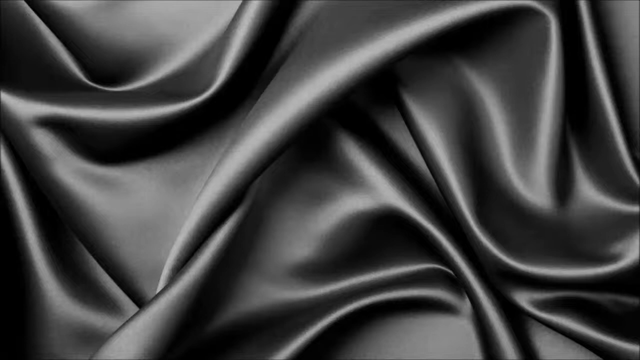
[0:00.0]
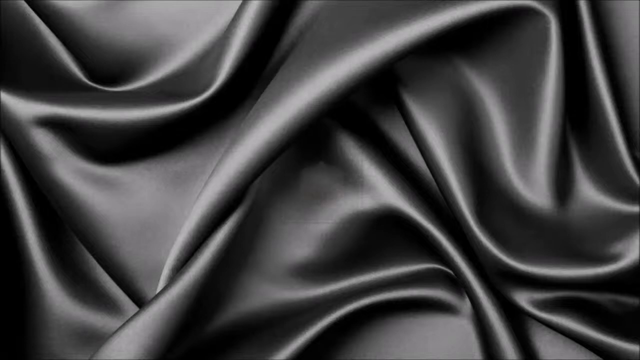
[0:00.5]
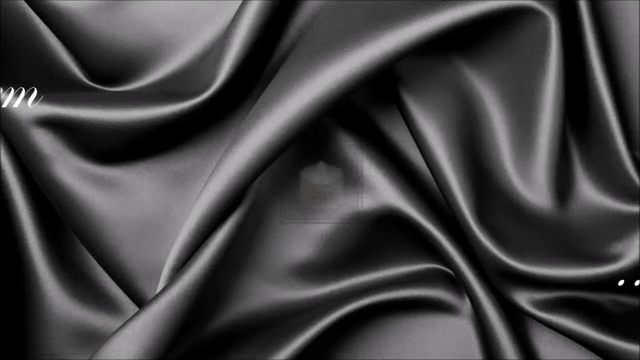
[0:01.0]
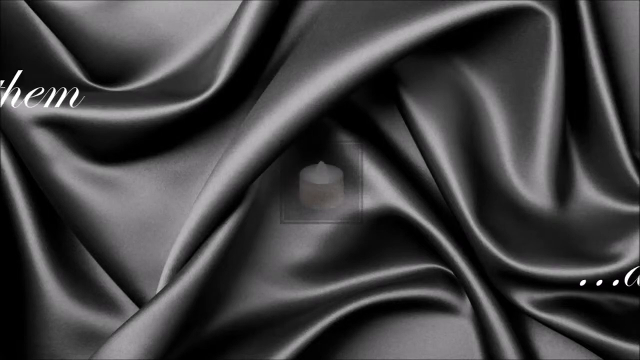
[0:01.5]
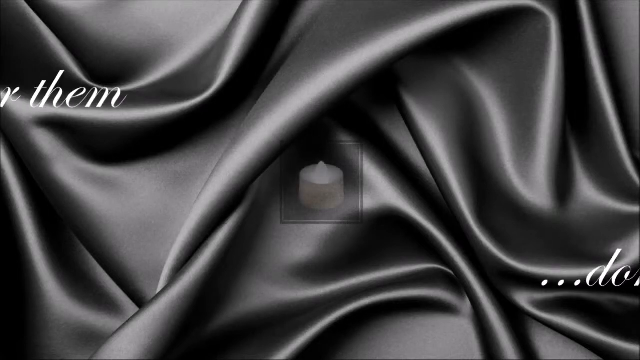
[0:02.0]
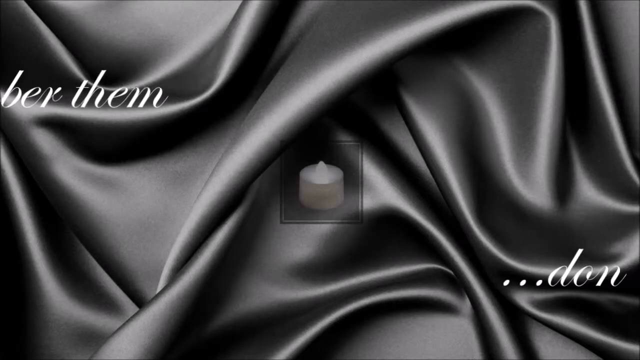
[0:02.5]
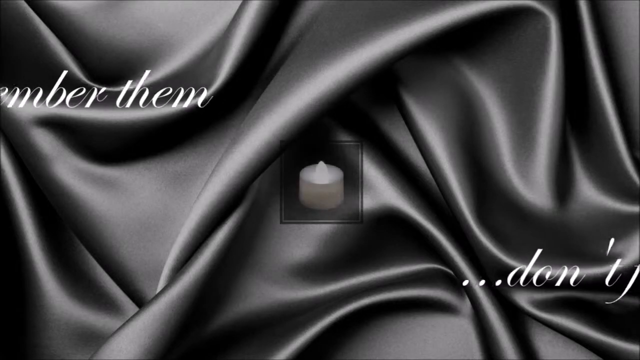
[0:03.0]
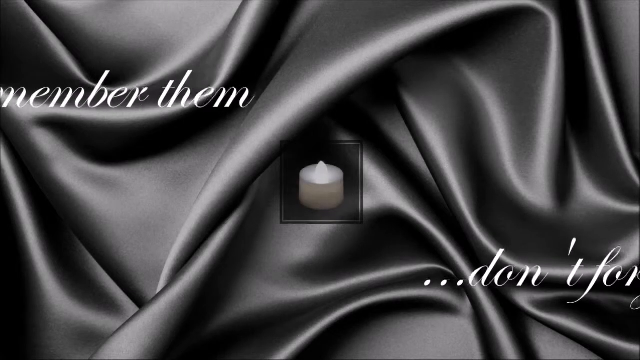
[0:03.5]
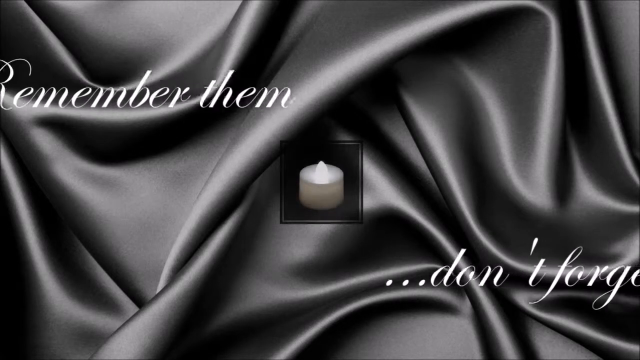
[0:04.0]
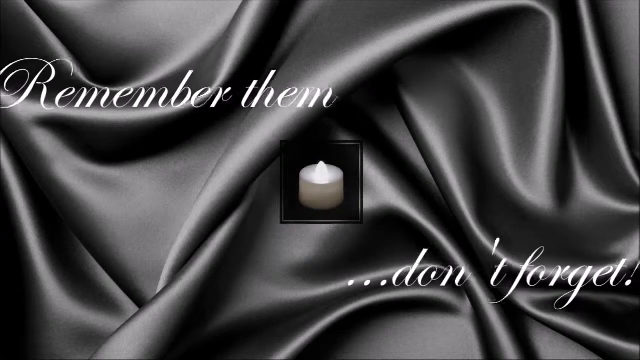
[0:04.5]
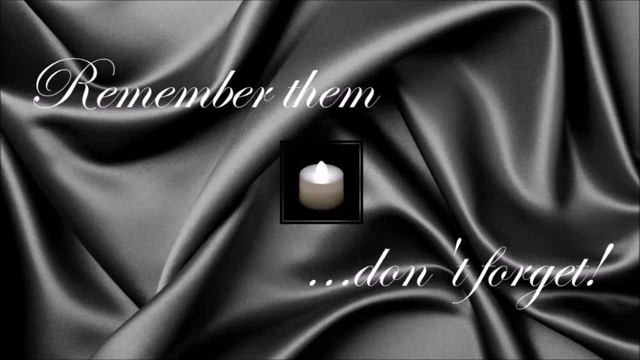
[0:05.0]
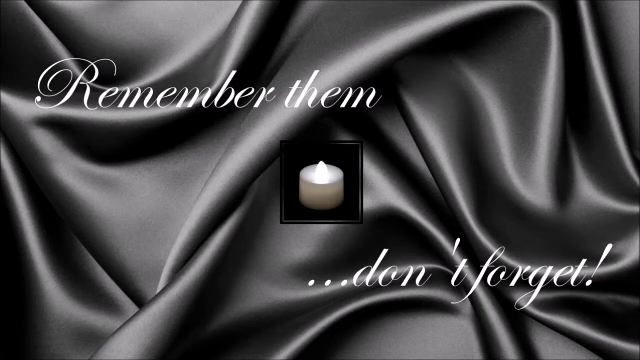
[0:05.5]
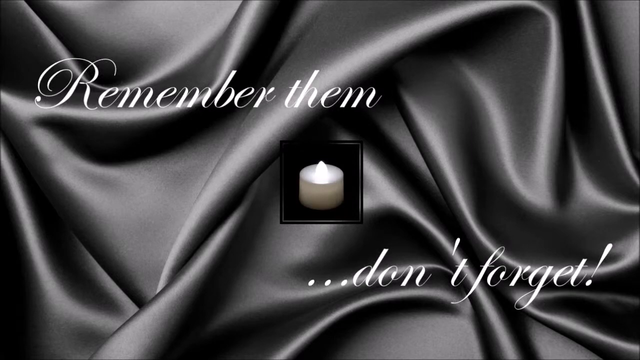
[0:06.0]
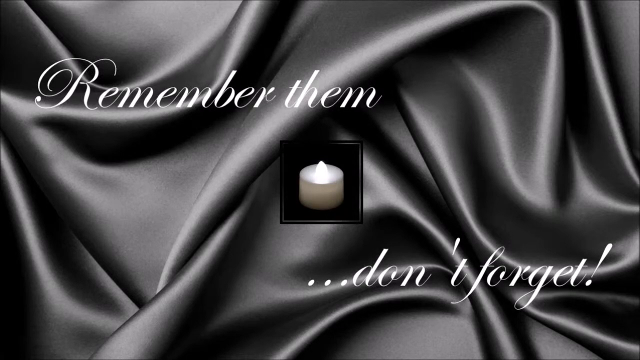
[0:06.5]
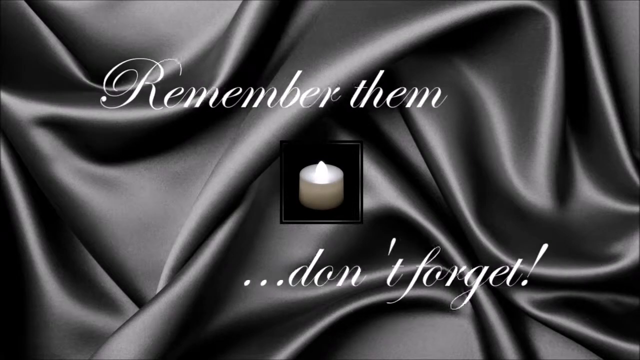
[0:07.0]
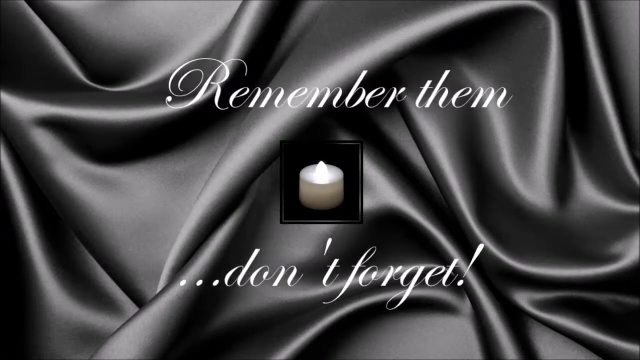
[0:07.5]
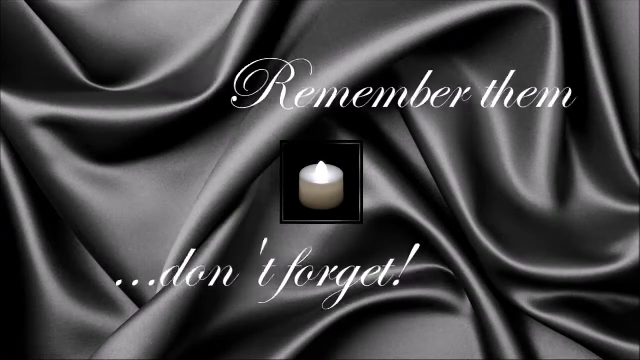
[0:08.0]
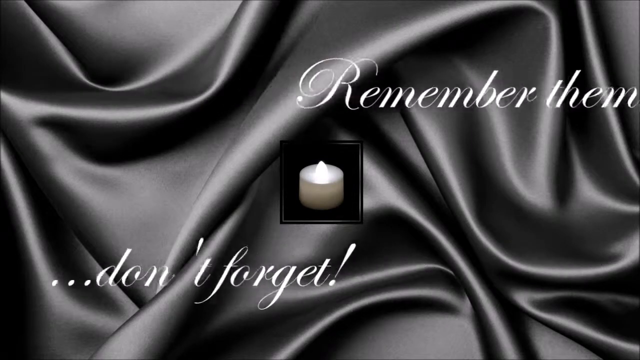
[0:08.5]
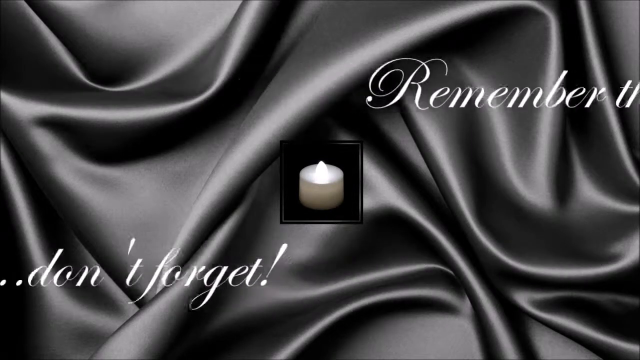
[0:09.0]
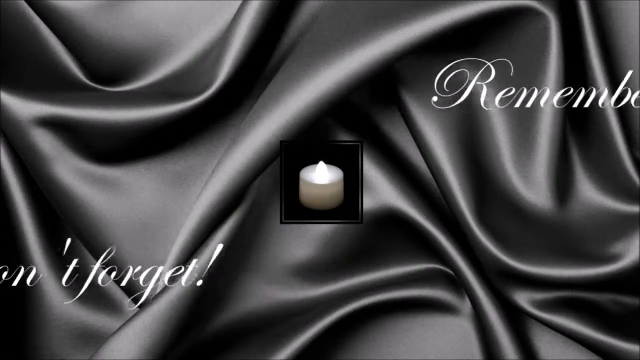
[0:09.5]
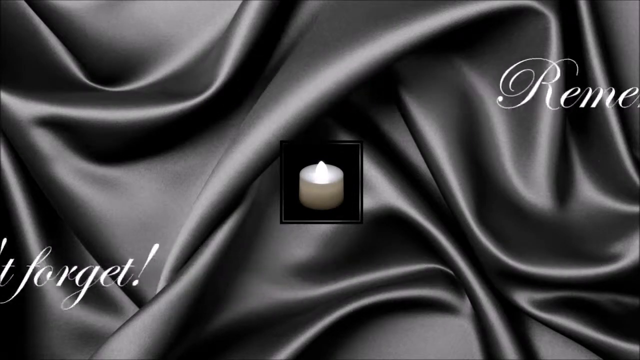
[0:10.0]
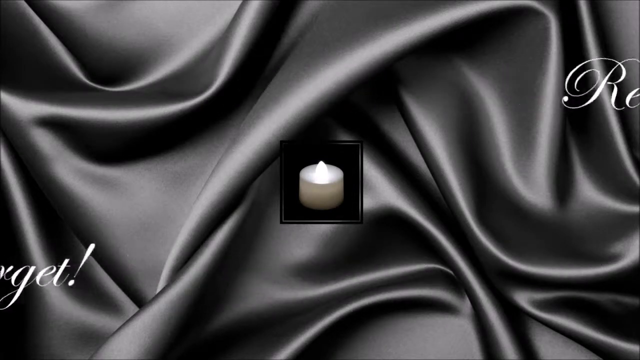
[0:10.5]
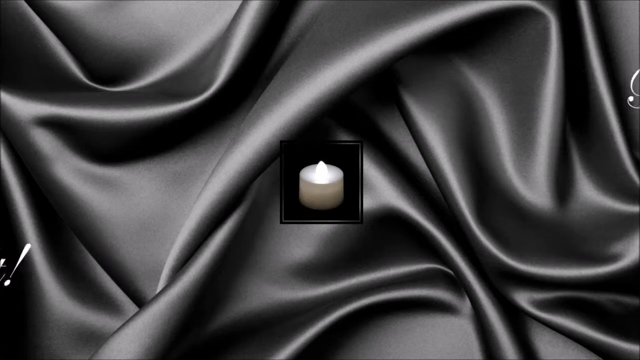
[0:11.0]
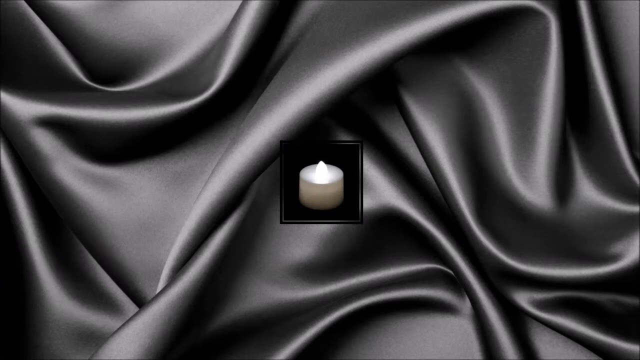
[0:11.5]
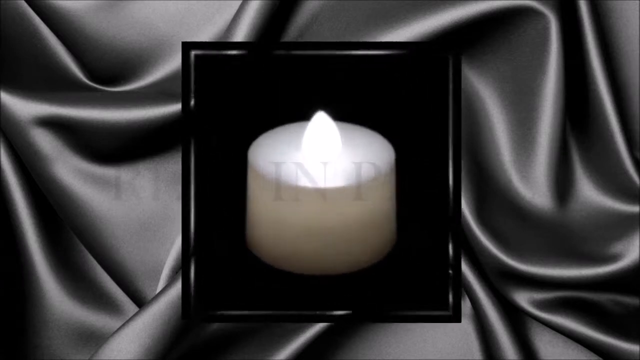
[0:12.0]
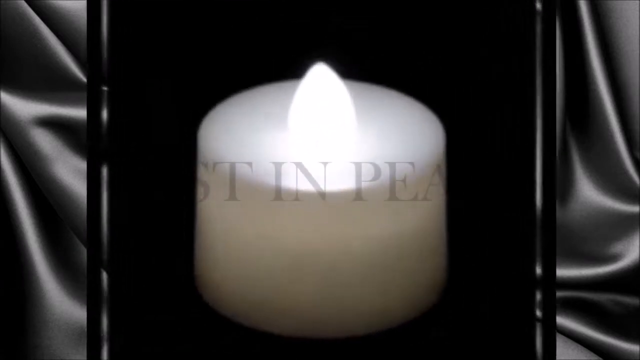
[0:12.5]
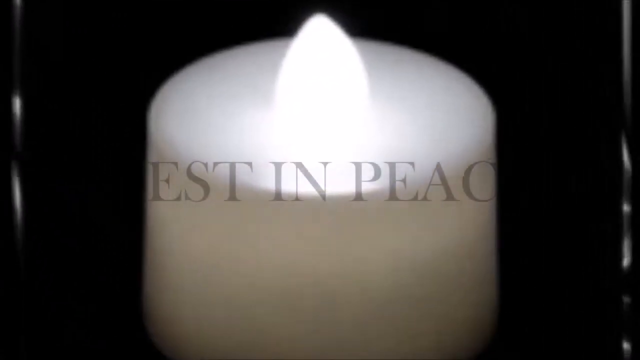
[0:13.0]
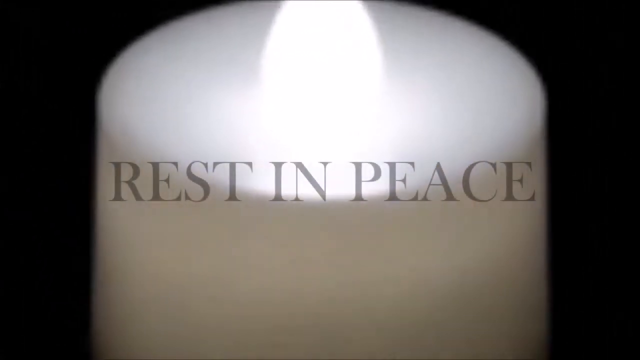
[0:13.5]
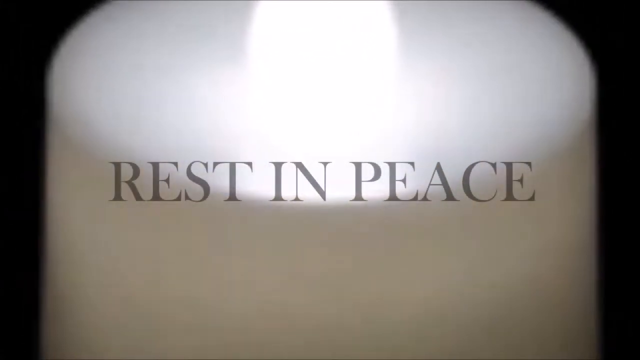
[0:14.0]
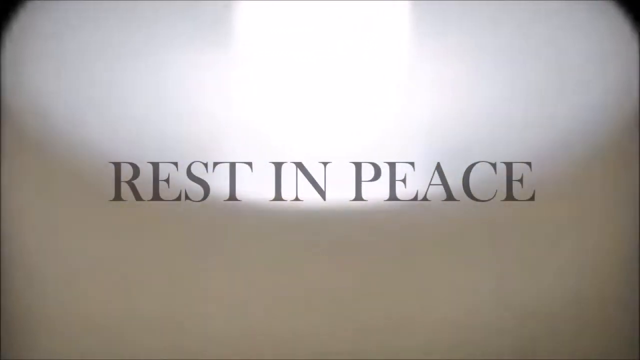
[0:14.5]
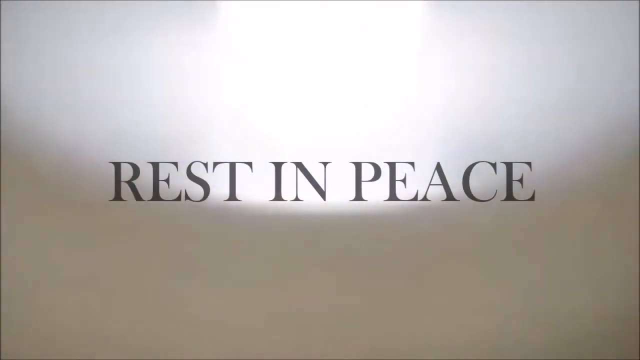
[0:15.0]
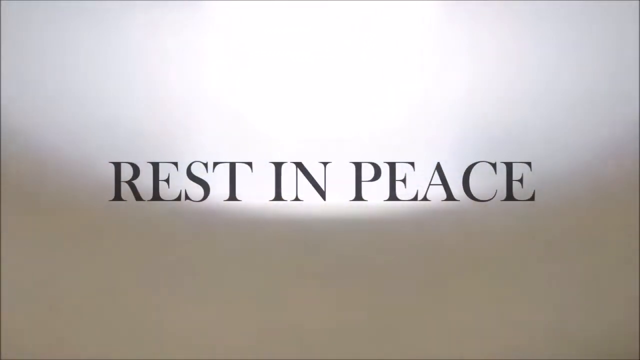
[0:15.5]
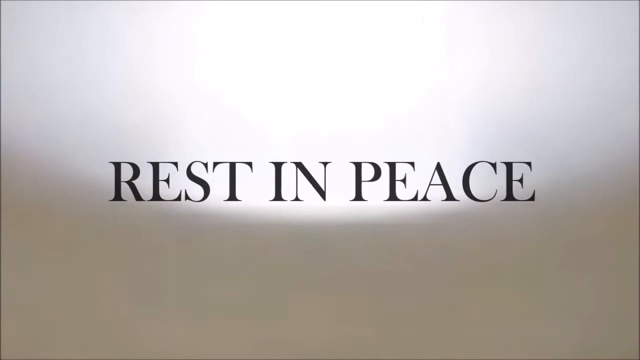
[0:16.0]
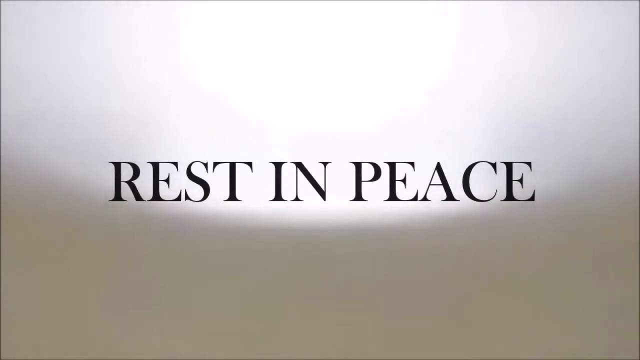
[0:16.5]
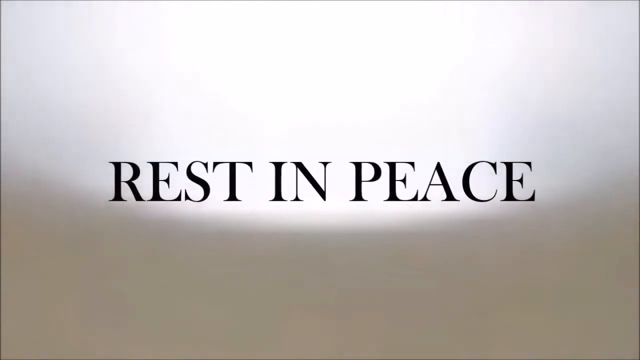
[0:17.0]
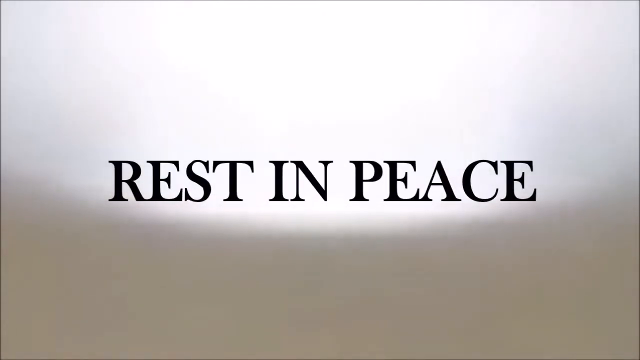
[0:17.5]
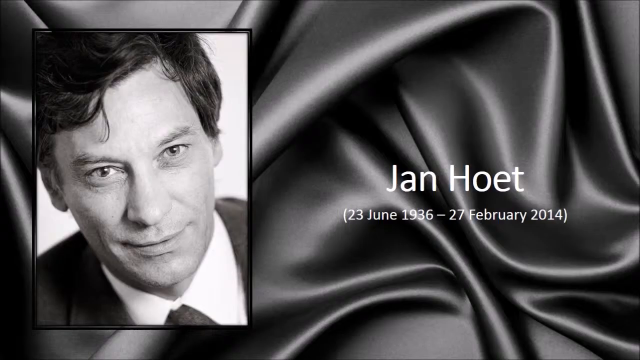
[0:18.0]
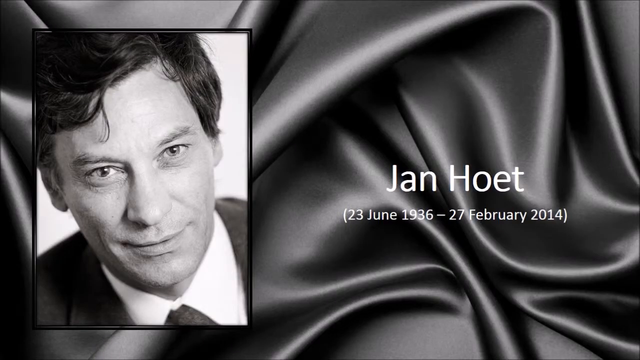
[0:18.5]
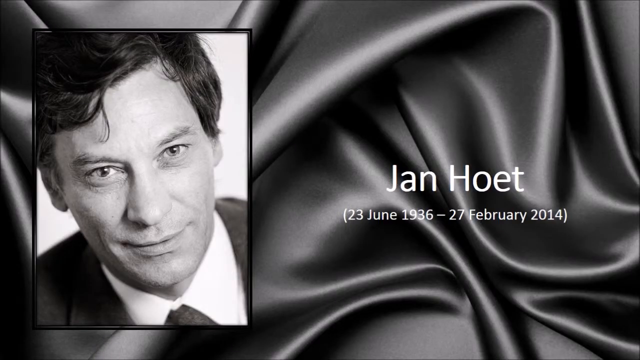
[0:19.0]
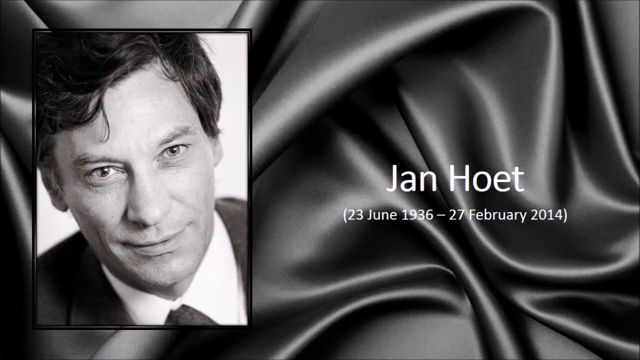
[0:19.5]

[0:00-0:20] A material that looks like cloth, a satin or silk cloth that is rippled or folded, fills the screen in a dark grey colour. In the middle of the screen, in a black square, a white candle with a little flame appears. In cursive writing above the candle, the words "remember them" move in from the left side toward the middle, and from the bottom right side the words "don't forget!" move in. The words cross the screen and move off on the other side, and the candle enlarges so that it fills the whole screen, and then "rest in peace" appears in a dark grey colour. Next, a black-and-white picture of a Caucasian man appears on the left side of the screen; his eyes look light and might be blue, though the black and white makes it hard to tell. He has short, mostly straight, dark hair and a prominent nose, and he wears a button-up shirt and a suit. His name is given as Jan Hoet, with the dates "23rd June 1936 to 27th February 2014".